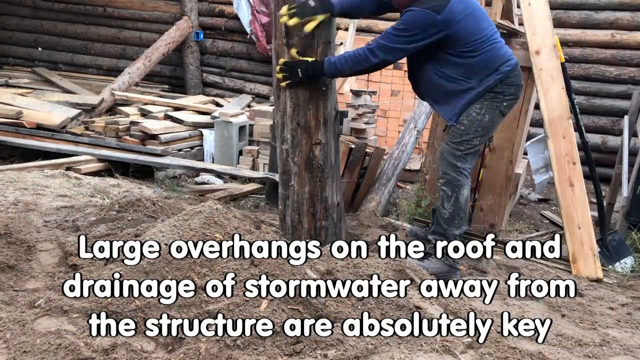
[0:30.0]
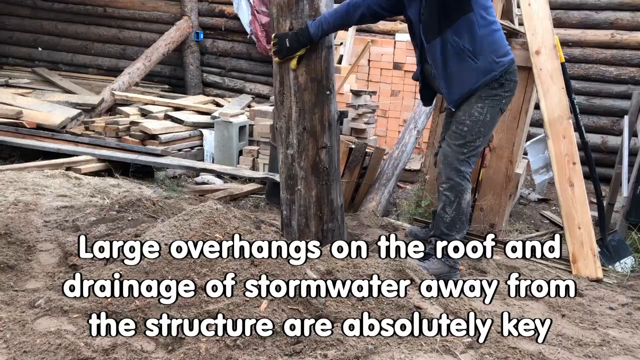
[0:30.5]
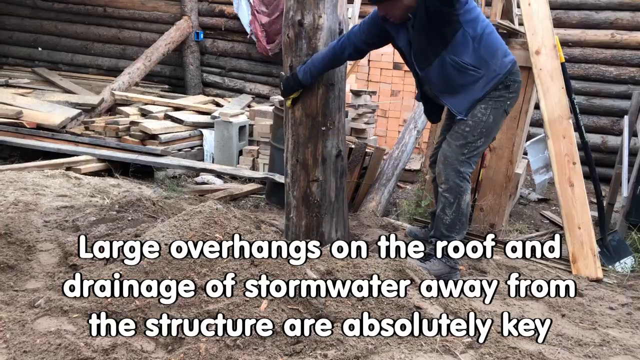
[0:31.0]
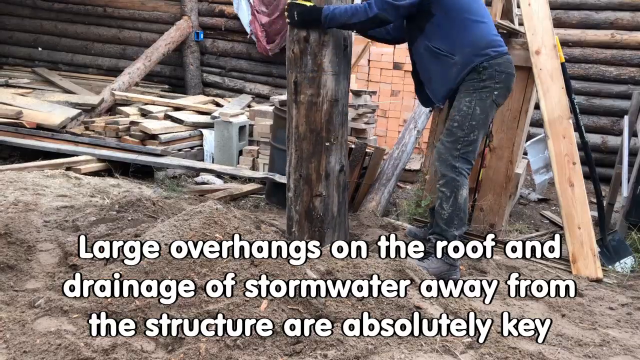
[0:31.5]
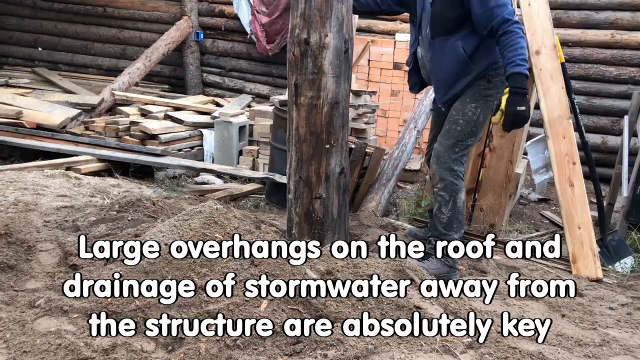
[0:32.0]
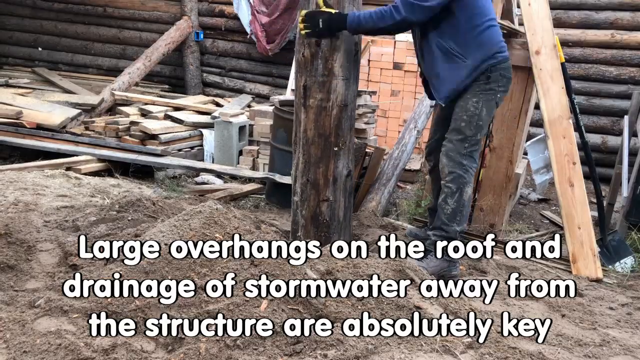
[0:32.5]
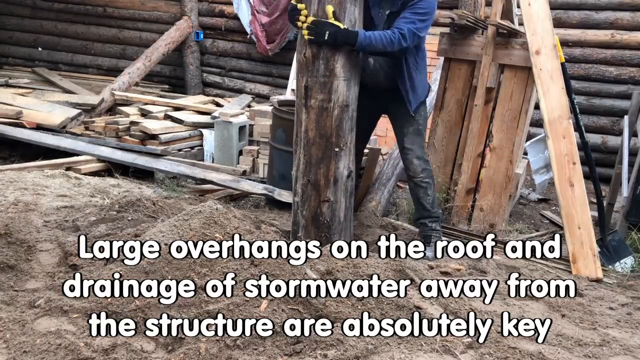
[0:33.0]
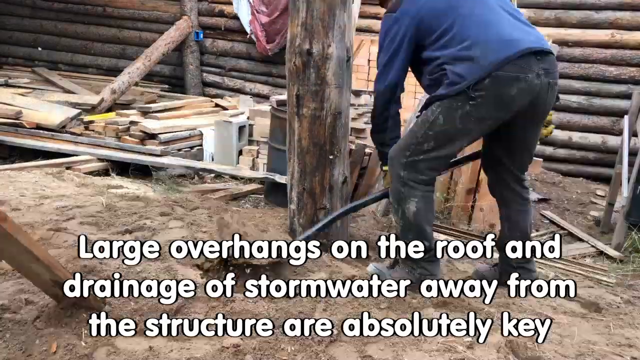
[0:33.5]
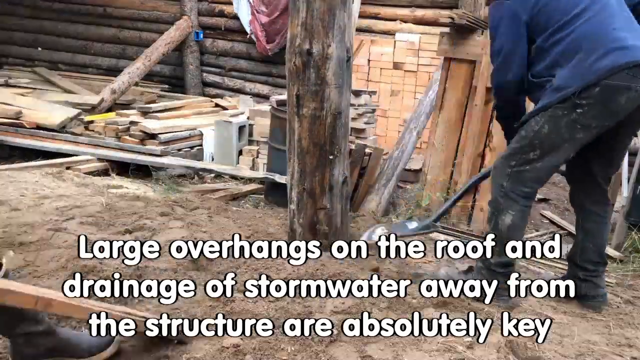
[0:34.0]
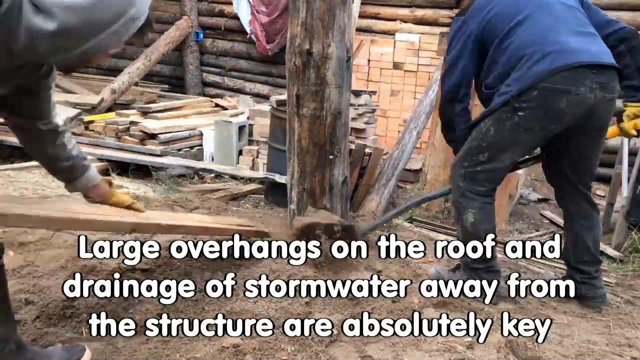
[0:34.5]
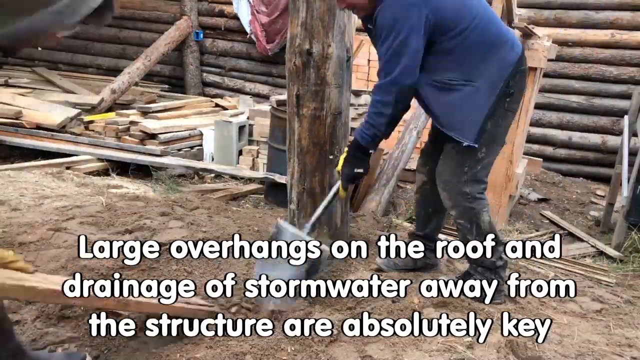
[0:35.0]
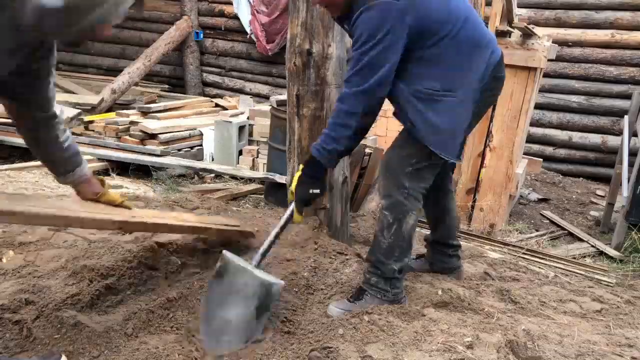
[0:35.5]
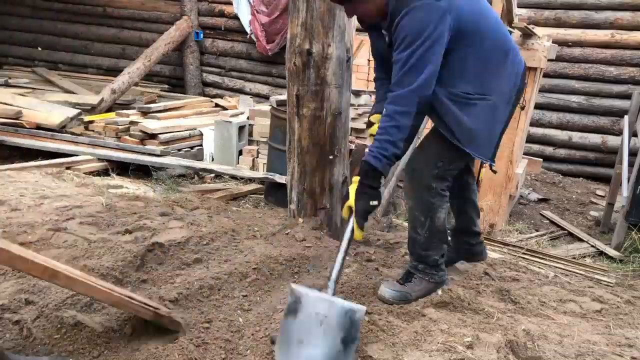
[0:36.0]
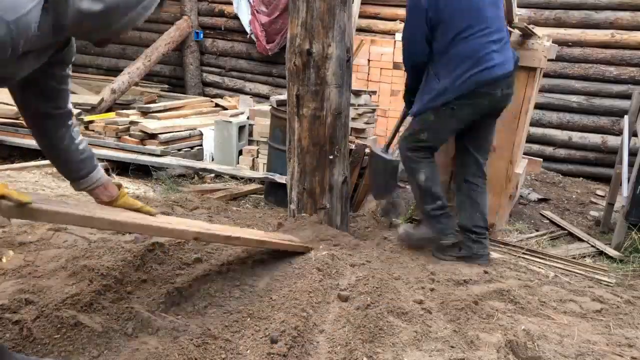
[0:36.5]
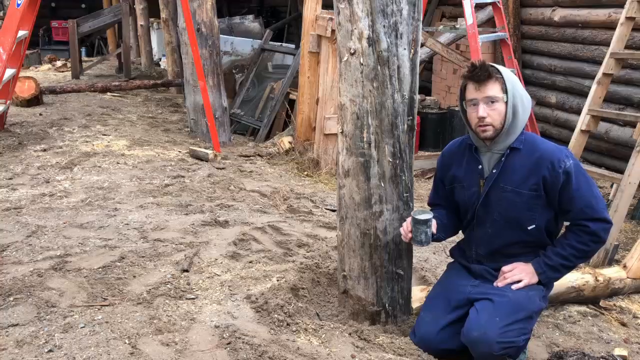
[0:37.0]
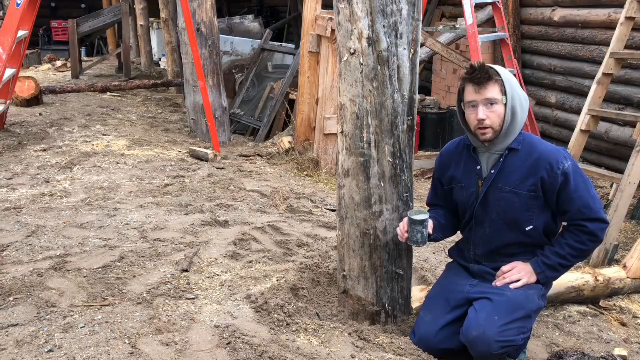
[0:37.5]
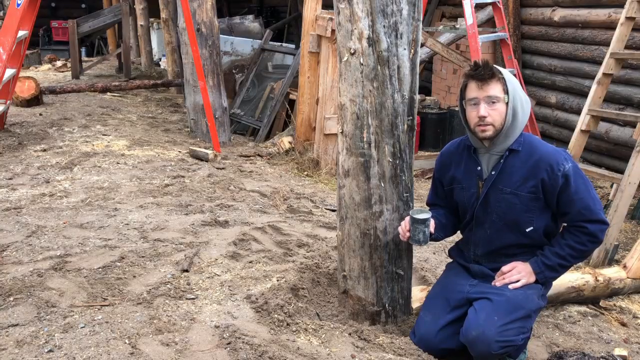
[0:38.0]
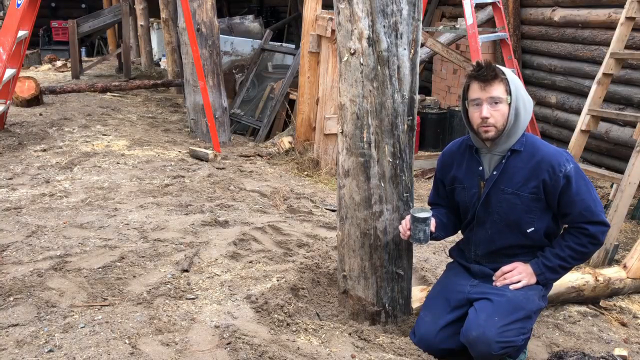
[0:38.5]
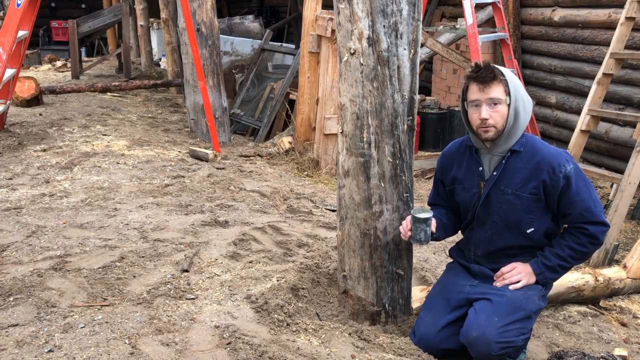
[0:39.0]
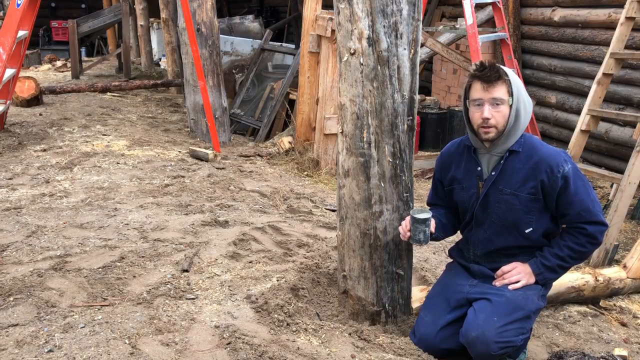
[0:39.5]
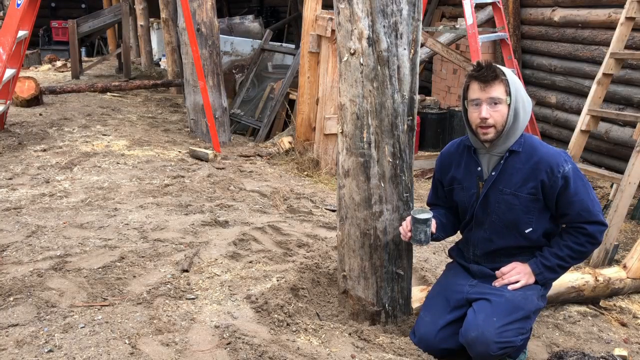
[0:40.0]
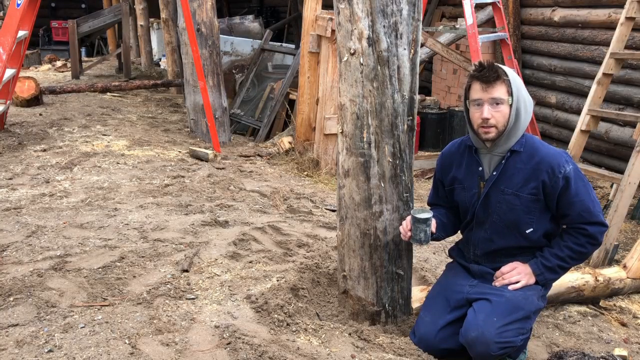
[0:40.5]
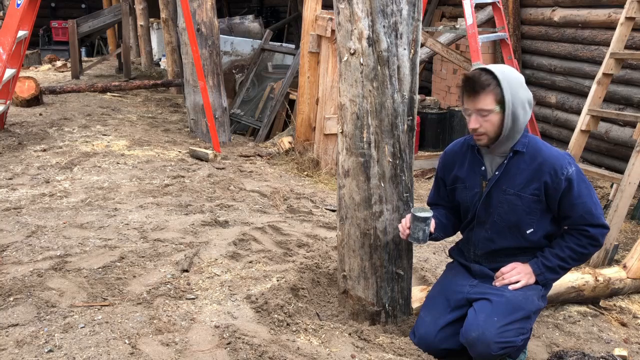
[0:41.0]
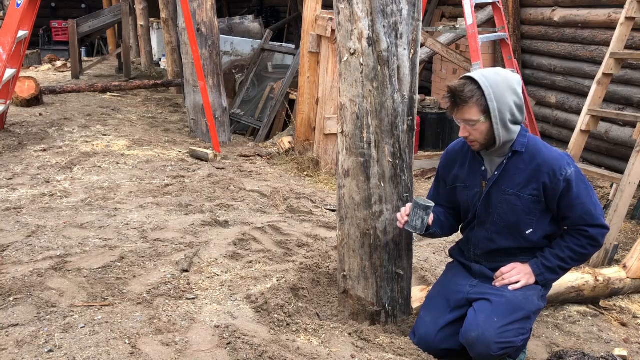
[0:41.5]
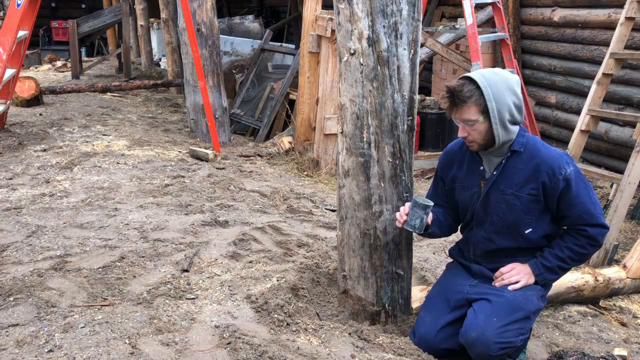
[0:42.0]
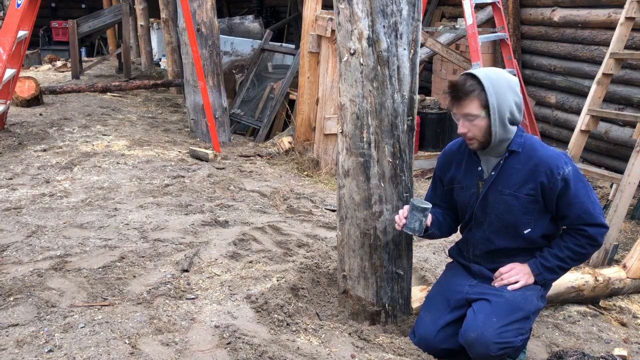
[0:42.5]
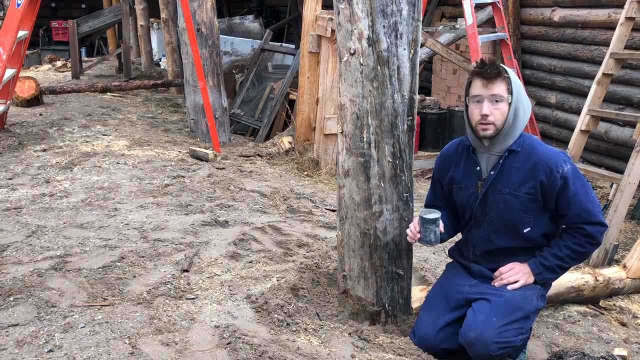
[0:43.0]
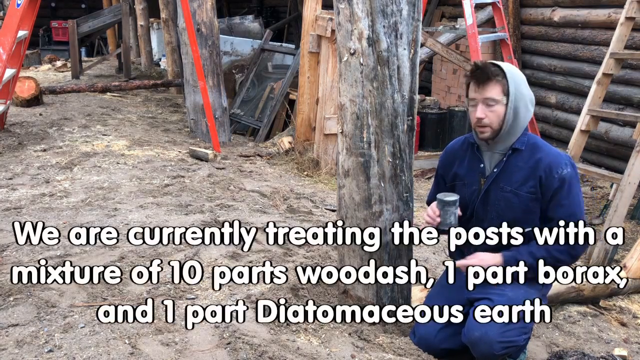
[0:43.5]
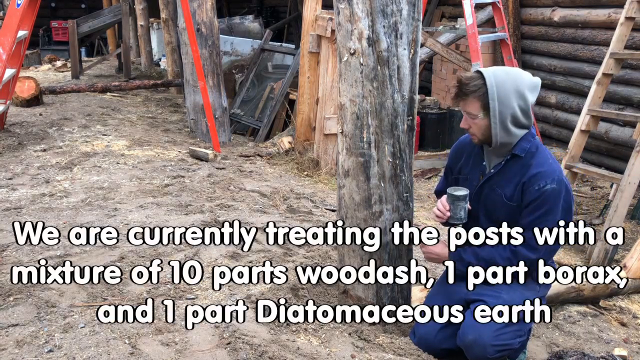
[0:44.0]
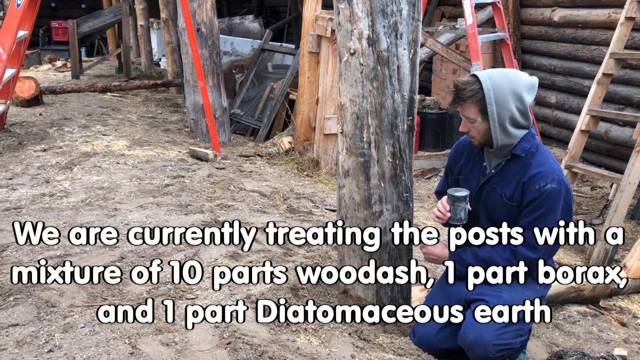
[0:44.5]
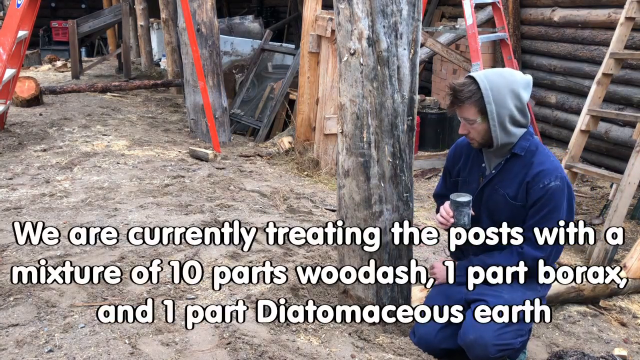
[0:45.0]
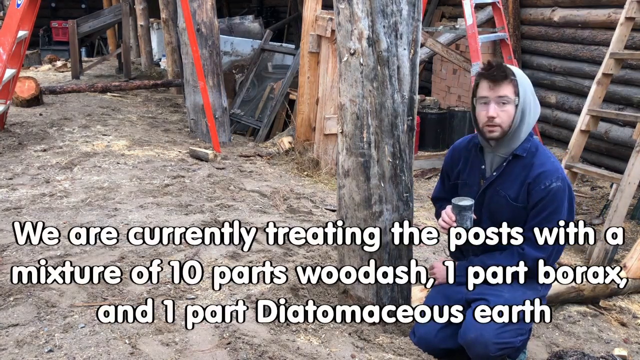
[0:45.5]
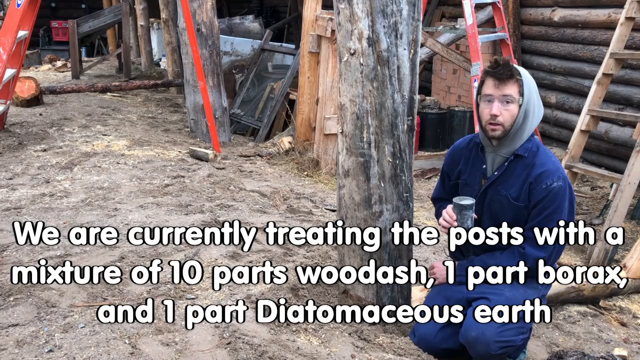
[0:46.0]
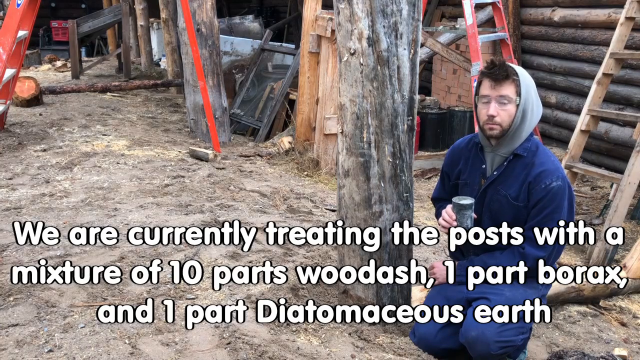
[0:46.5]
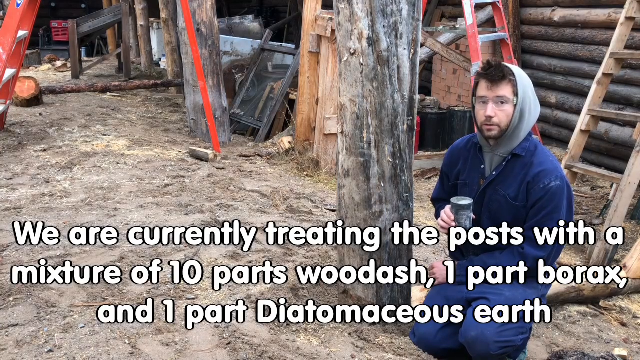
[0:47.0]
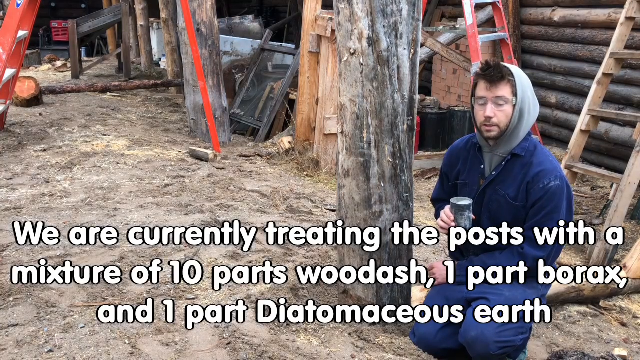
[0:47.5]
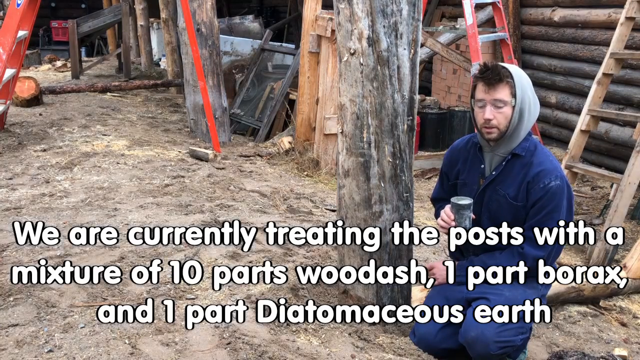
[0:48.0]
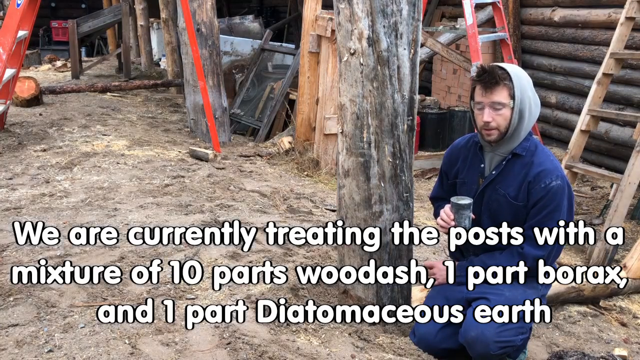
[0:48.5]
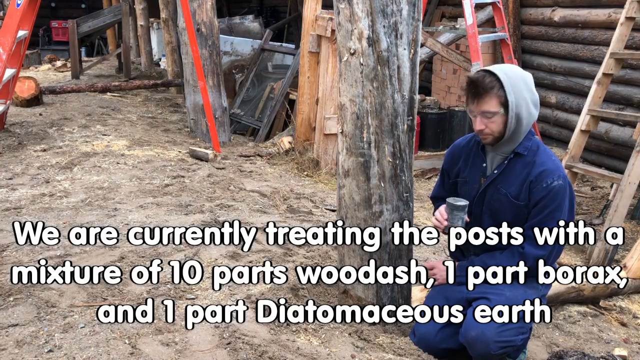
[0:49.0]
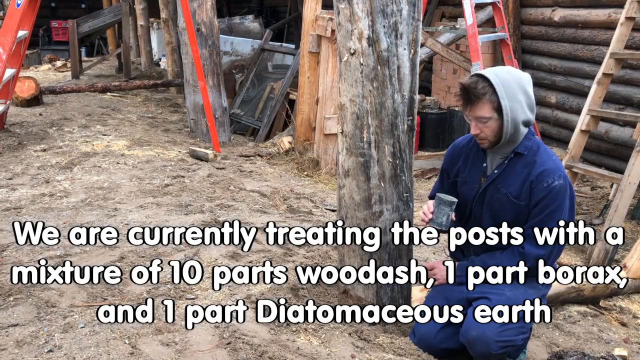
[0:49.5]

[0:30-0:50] A man guides a large wooden post into a hole in the ground. Two men then shovel dirt and gravel around the base of the post: the man on the right uses a shovel, and the man on the left uses a plank of wood to push dirt to the base of the post. The scene changes to one of the men kneeling next to the post, holding what looks like a cup of water in his right hand. He wears a gray hoodie pulled up over his head with a blue denim jacket over it, and goggles. He speaks to the camera and occasionally gestures toward the post. Captions at the bottom of the screen describe what is happening, appearing in segments; in their entirety they read, "Large overhangs on the roof and drainage of stormwater away from the structure are absolutely key. We are currently treating the posts with a mixture of 10 parts wood ash, 1 part borax and 1 part Diatomaceous earth."